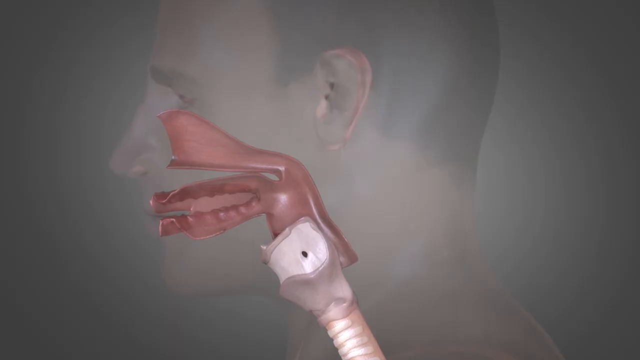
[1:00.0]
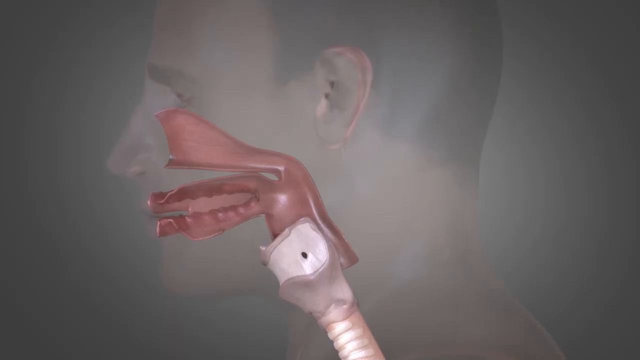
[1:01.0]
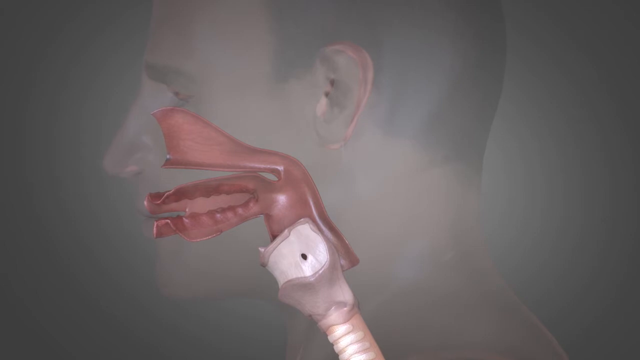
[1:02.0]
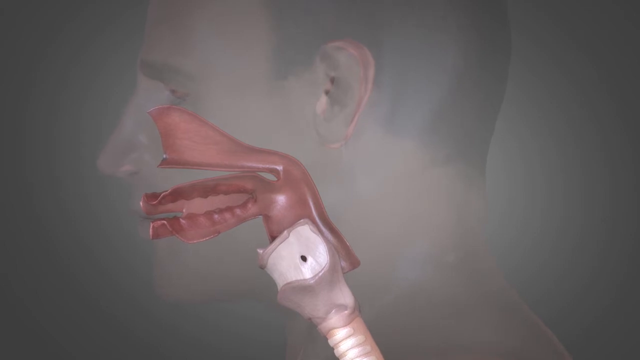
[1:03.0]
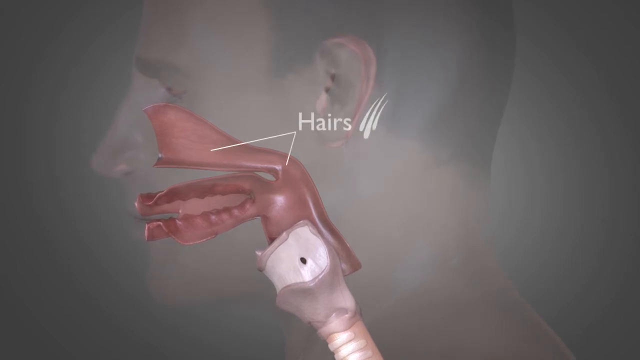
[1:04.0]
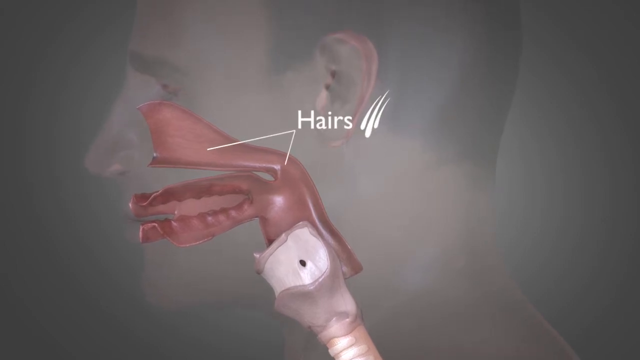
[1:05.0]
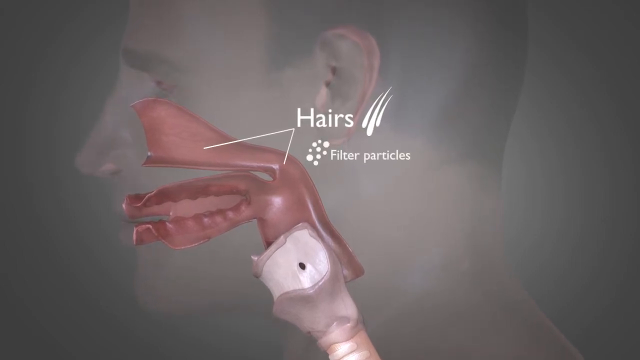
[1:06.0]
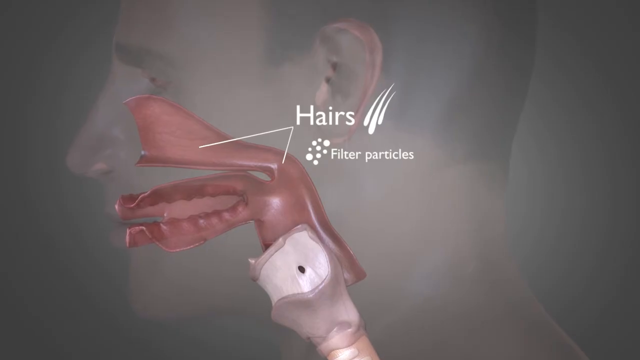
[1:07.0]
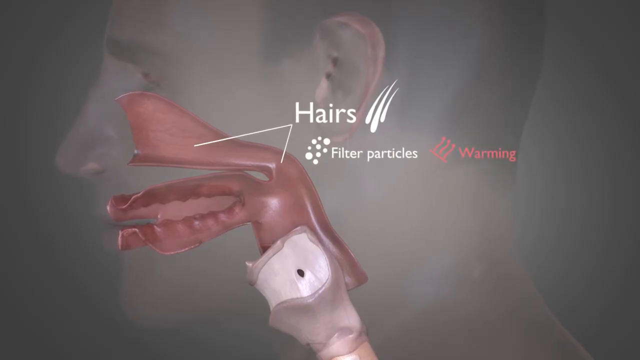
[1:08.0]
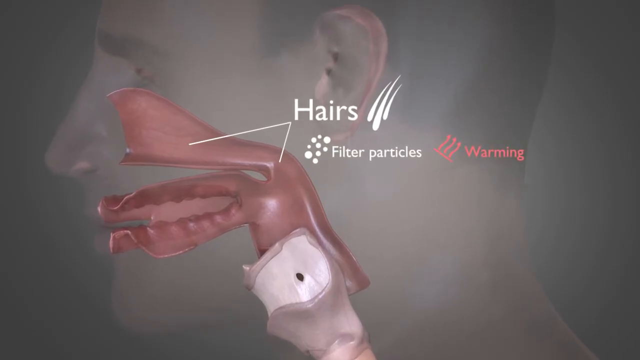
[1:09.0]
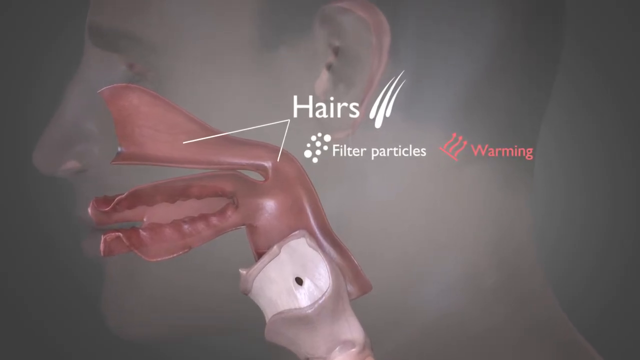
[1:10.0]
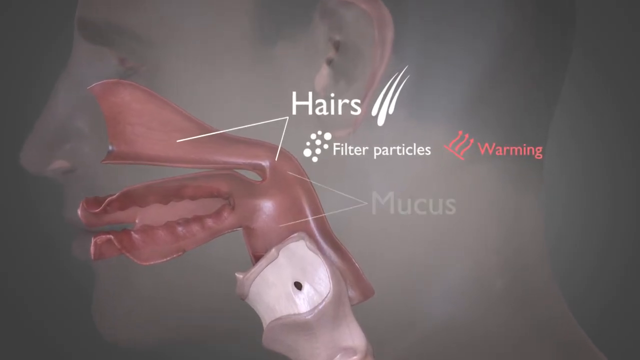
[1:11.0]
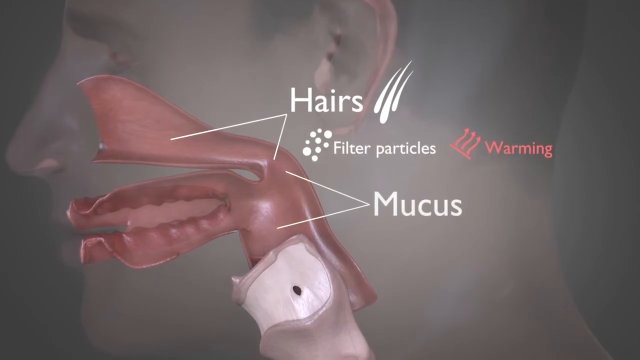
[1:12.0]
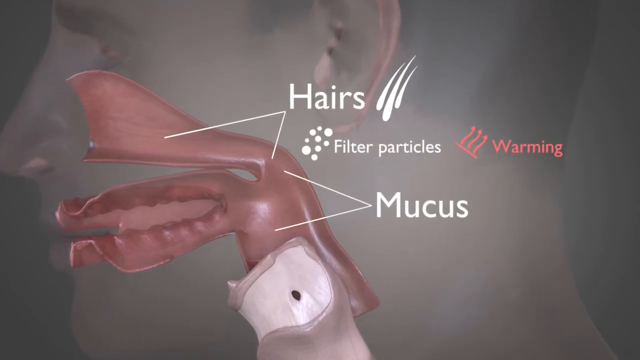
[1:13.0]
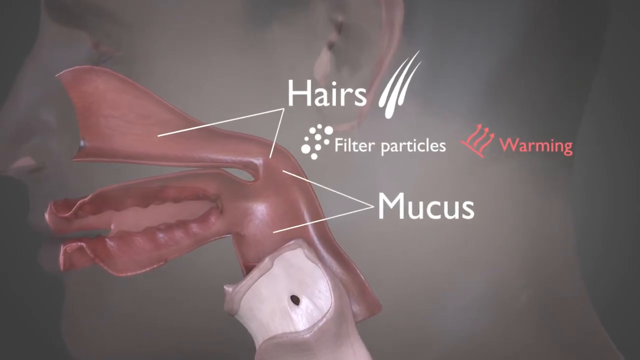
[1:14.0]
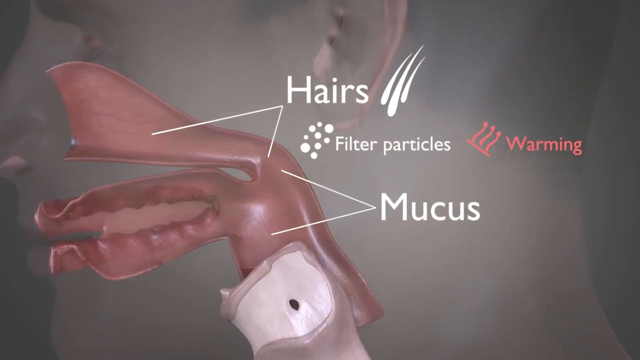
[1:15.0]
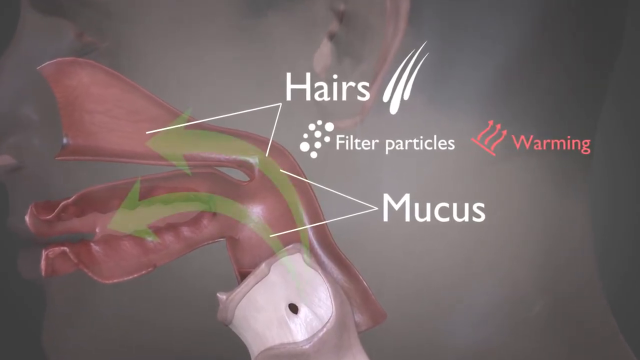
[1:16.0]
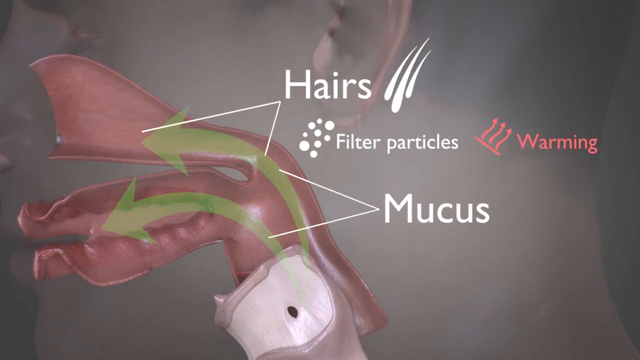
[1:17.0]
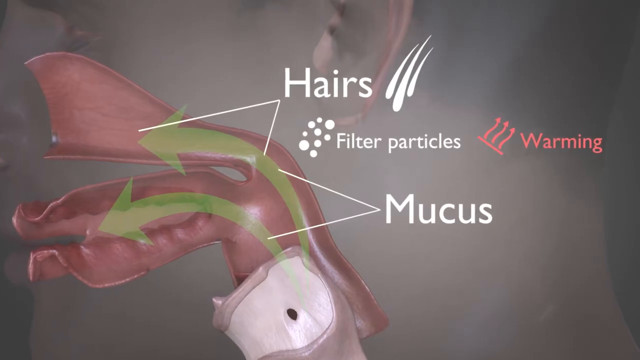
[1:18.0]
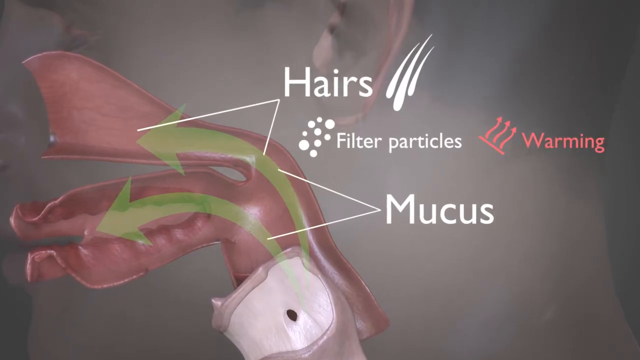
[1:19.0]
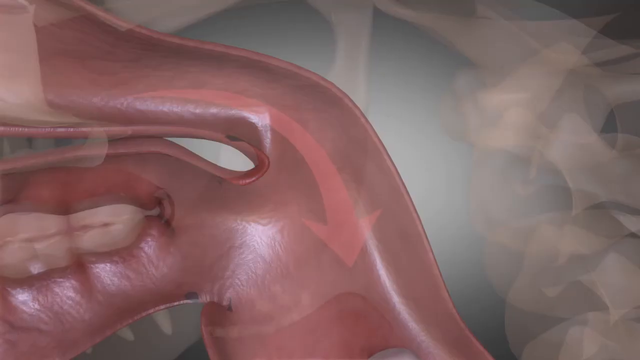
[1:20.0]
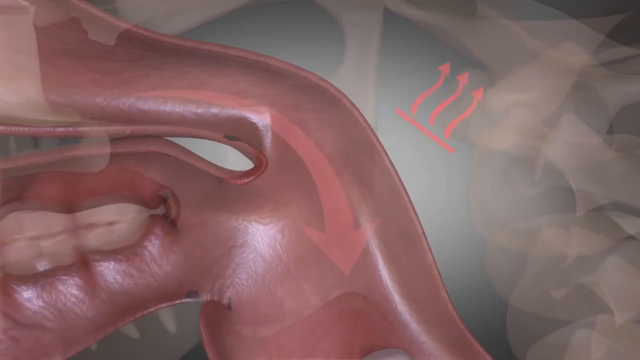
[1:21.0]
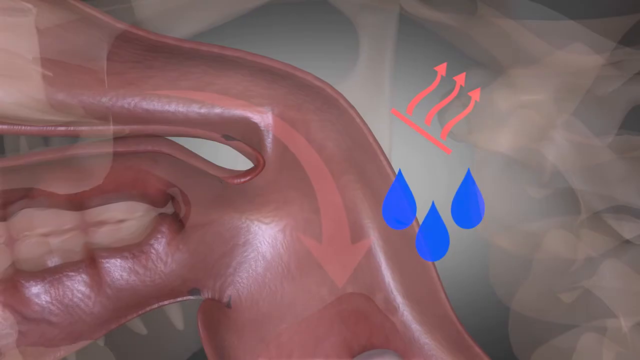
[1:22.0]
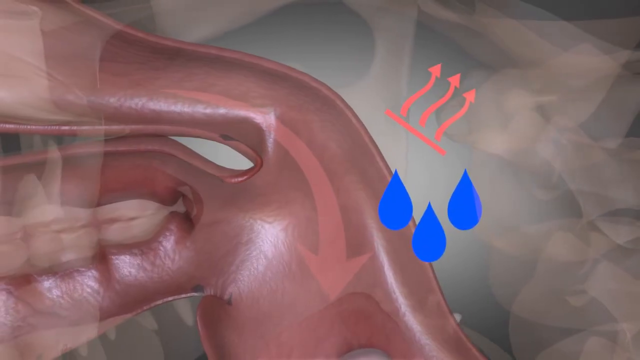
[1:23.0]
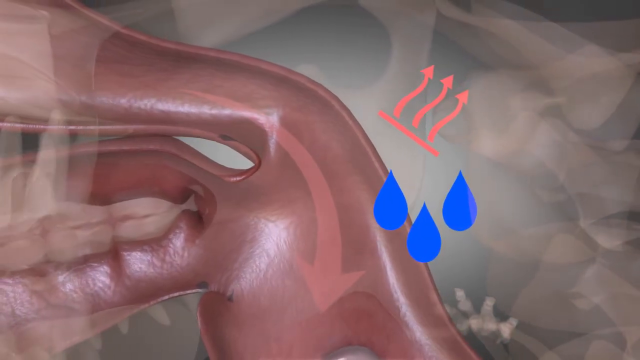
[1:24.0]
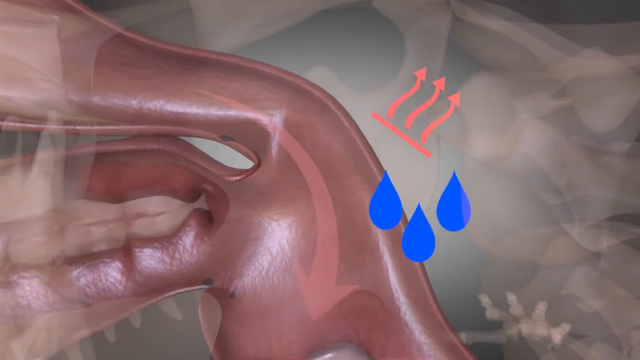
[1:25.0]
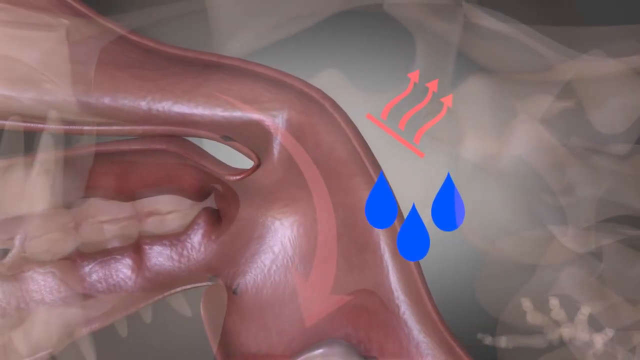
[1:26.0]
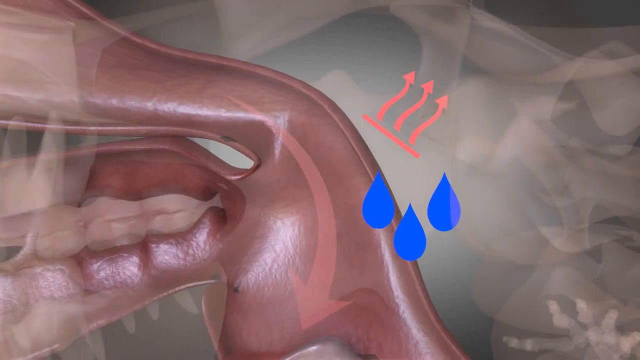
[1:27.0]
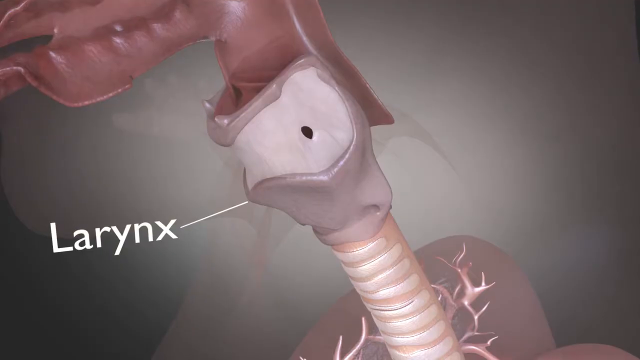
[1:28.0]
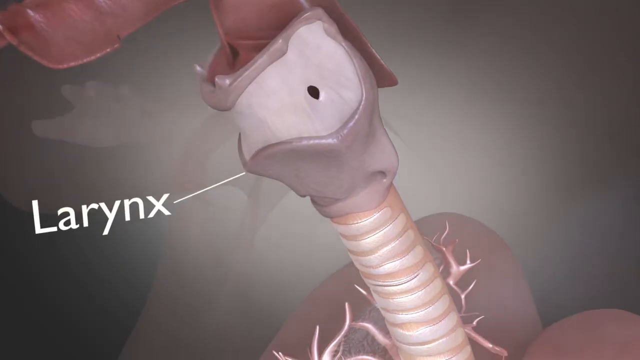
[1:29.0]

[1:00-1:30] A cross-section model of the human head shows the internal organs: the membranes around the mouth and nose are pink and the larynx is white. As the camera begins to zoom in, the word "Hairs" appears with two white lines pointing to the pink area behind the nose. Below it a cluster of white dots appears with the words "filter particles", and next to that are three squiggly red arrows pointing upward with the word "warming". As the camera moves in closer, the word "Mucus" appears with two white lines pointing toward the lower portion of the pink area right next to the mouth, and two green arrows move up from the larynx toward the nose and the mouth. Another close-up of the pink areas behind the nose and mouth shows a red arrow moving from the nose down toward the larynx, with an icon beside it of three squiggly red arrows pointing up and three blue drops of water. Then there is a close-up of the larynx, which is labeled on the left.